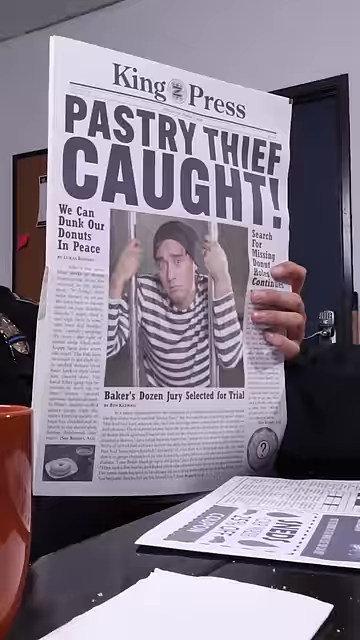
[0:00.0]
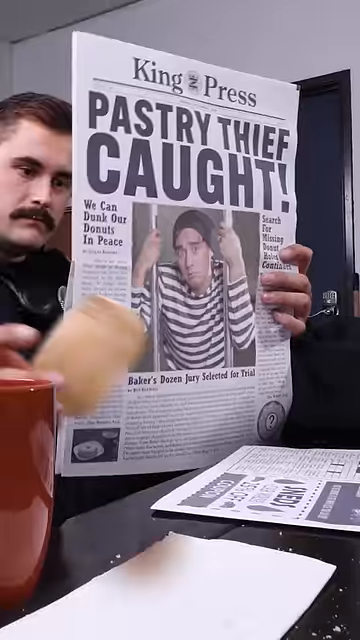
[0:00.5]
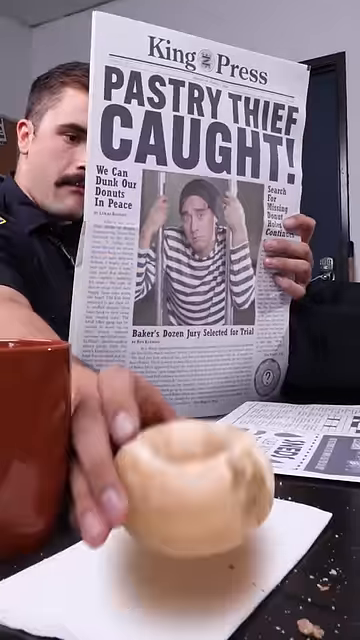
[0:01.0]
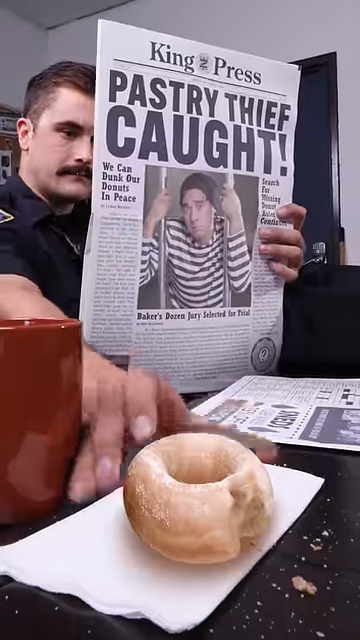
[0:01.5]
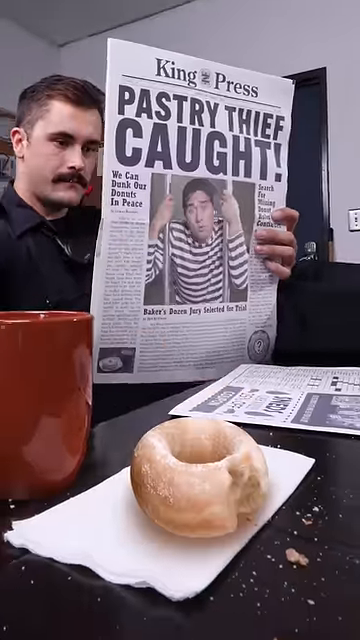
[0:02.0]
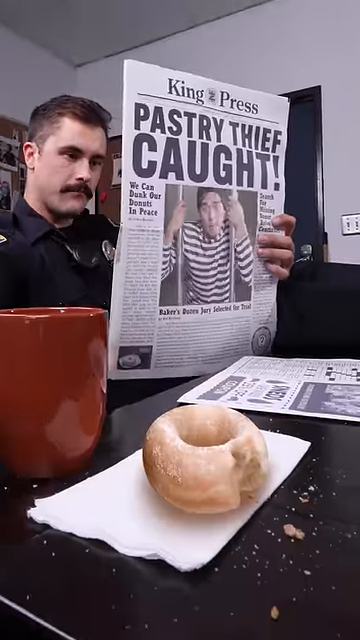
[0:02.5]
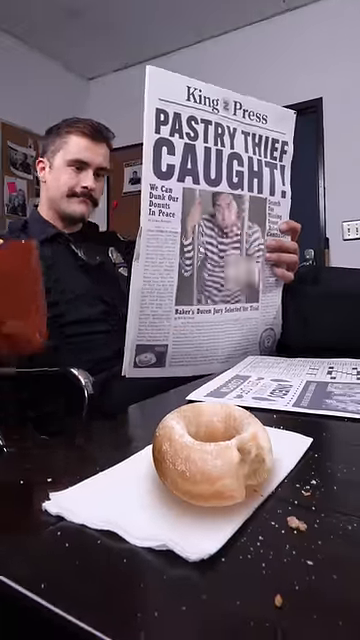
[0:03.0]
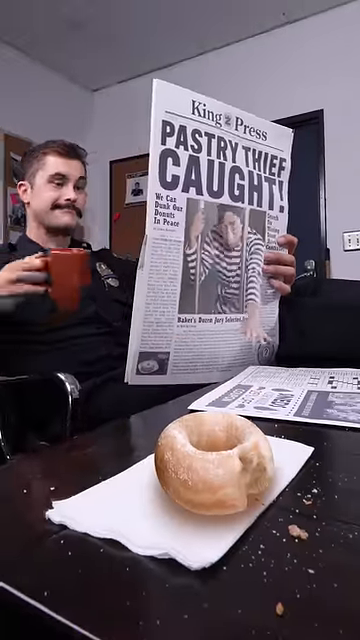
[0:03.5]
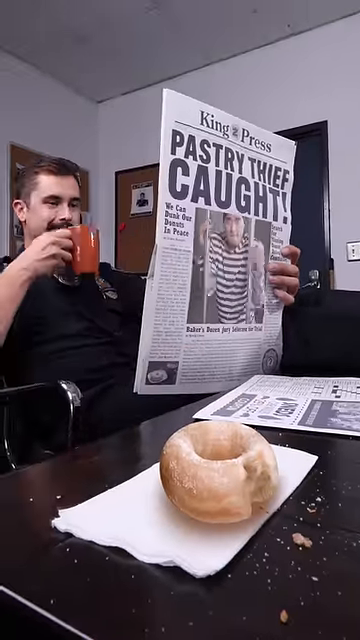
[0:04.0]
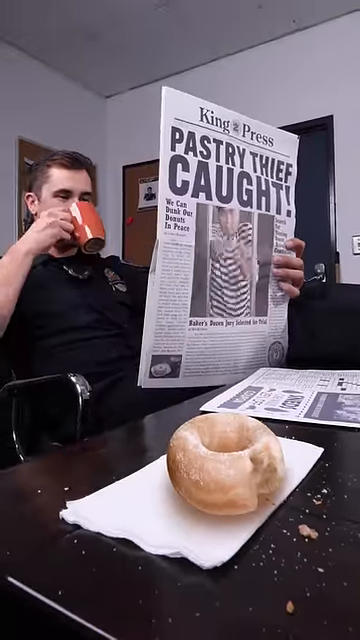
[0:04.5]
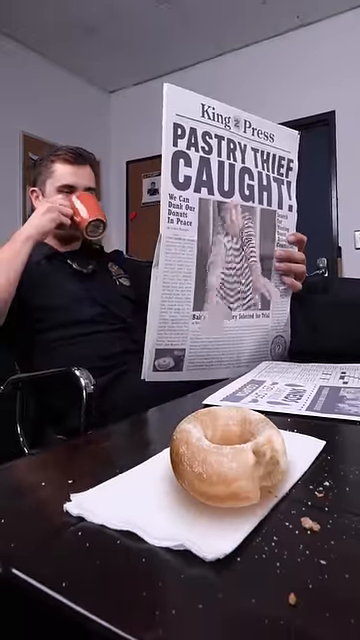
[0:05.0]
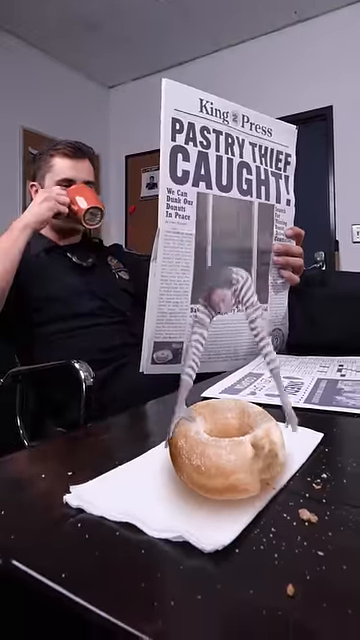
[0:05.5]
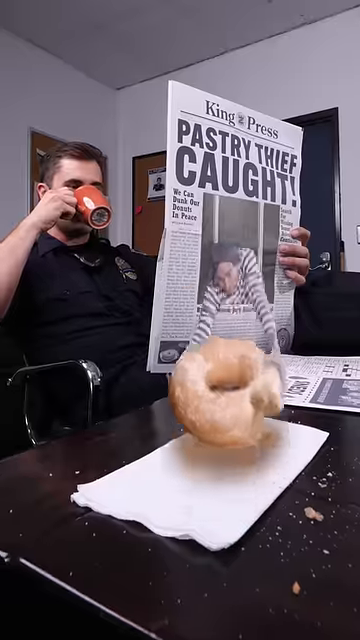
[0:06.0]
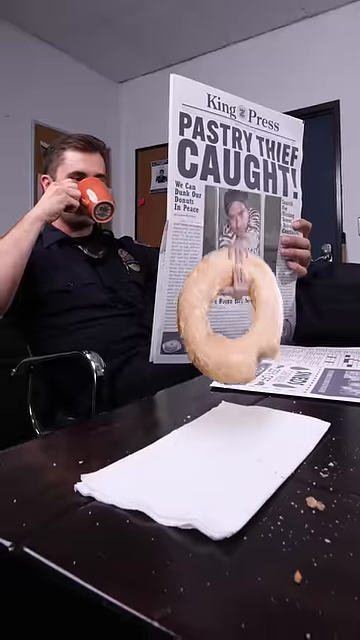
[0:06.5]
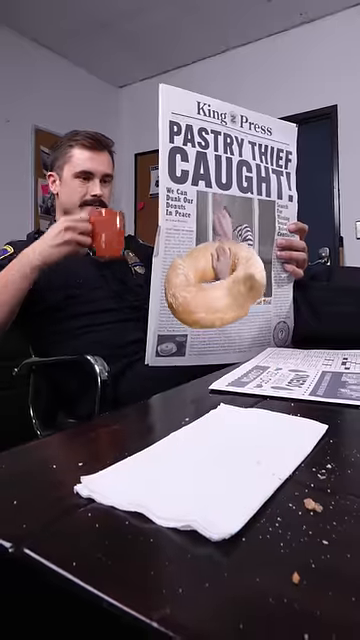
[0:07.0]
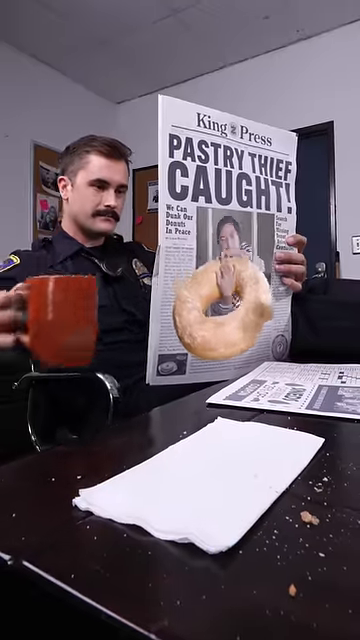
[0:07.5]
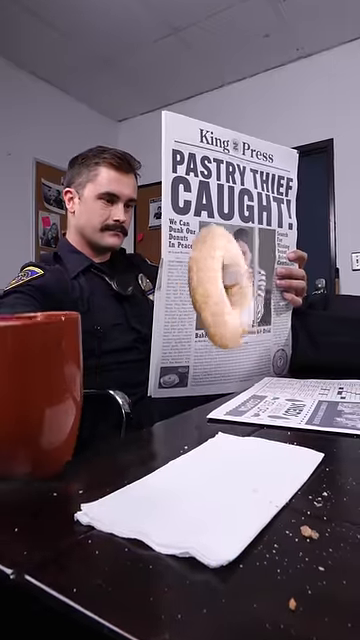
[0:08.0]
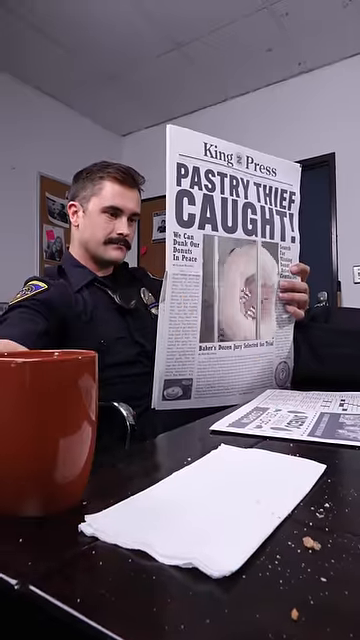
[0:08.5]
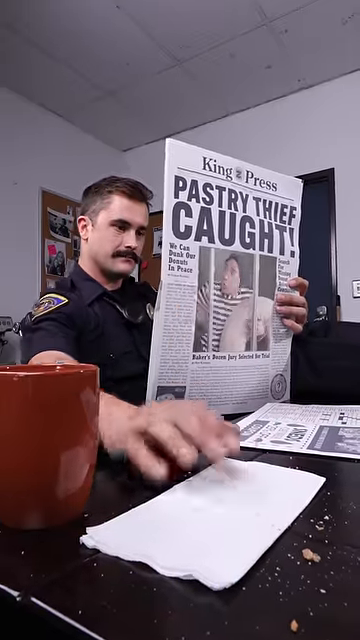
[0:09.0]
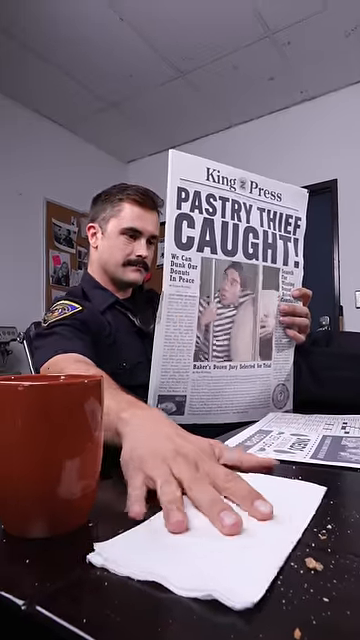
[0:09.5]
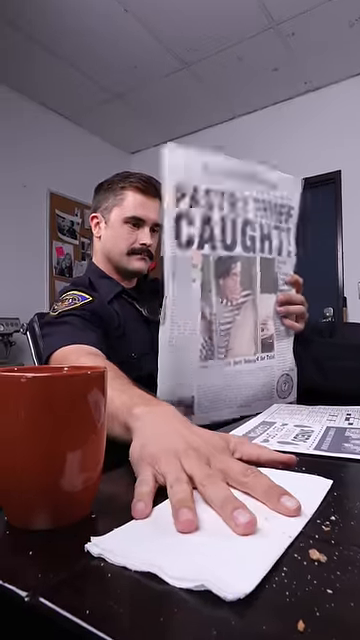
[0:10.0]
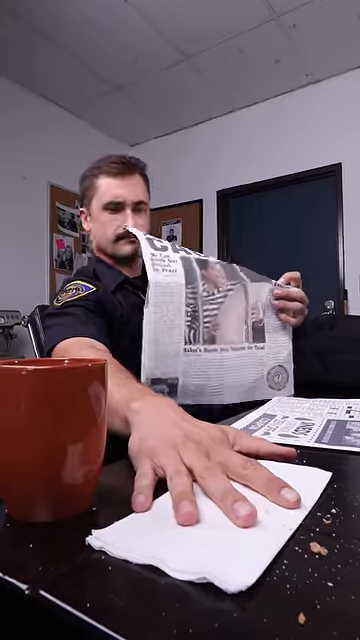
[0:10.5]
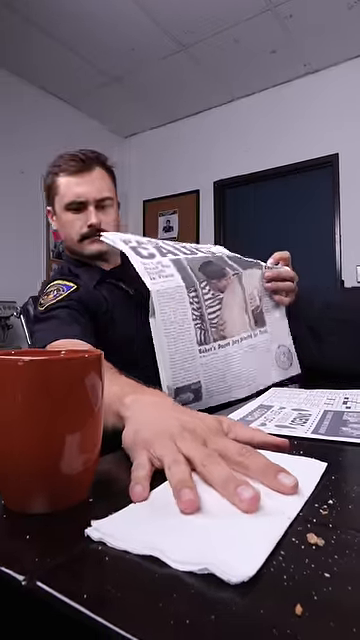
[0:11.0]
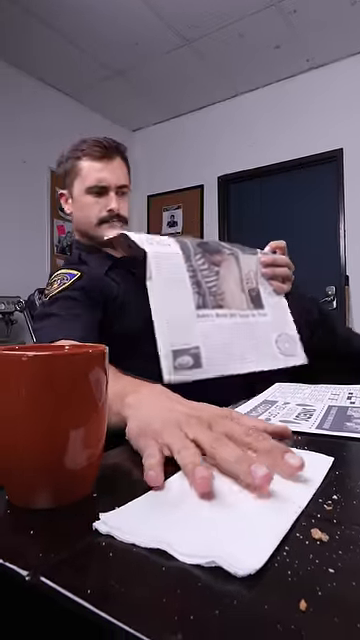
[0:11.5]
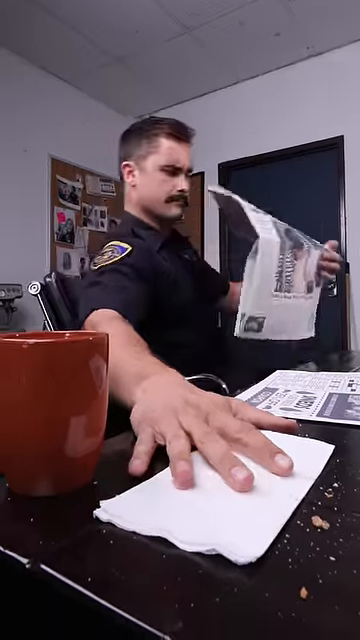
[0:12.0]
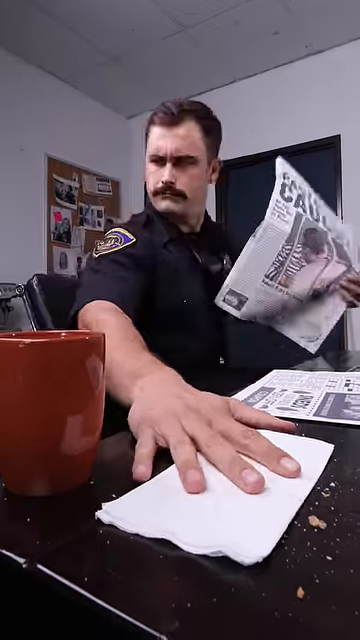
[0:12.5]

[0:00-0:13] This comedic video appears to take place inside a police officer's office, where the officer is in his chair at his desk reading a newspaper. He has put down his large donut on his napkin and reached for his maroon mug to take a drink. The front page of the paper, called "King's Press," has the headline "Pastry Thief Cop" and shows a criminal in a striped shirt behind bars. Once the officer puts the donut down, the image in the paper comes to life: the criminal reaches out of the image to grab the donut off the desk, manages to pull it through the bars into the image, and takes a bite. The officer then places his hand back down on the napkin, trying to reach for his donut, but realizes it is gone. He is confused and looks around, wondering where his donut could have gone. The humorous video uses a lot of special effects, imagery and special editing.